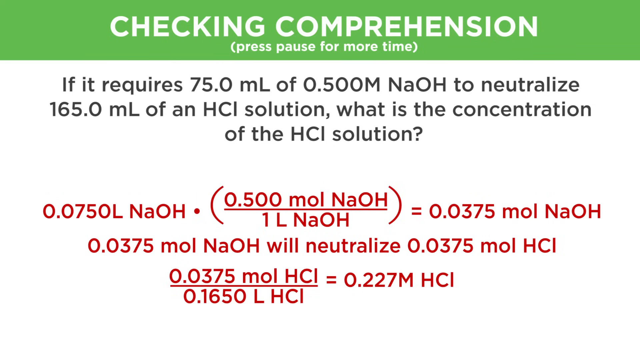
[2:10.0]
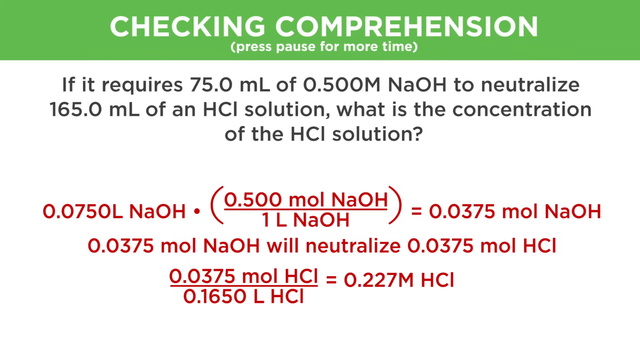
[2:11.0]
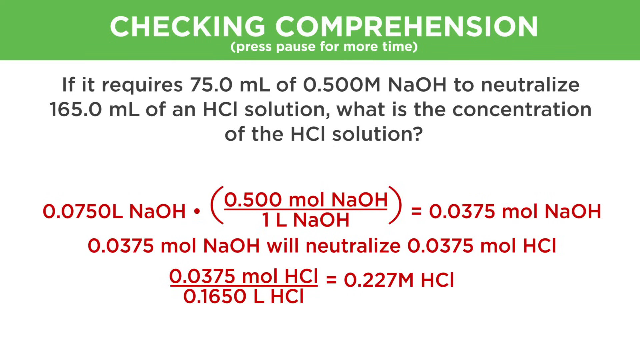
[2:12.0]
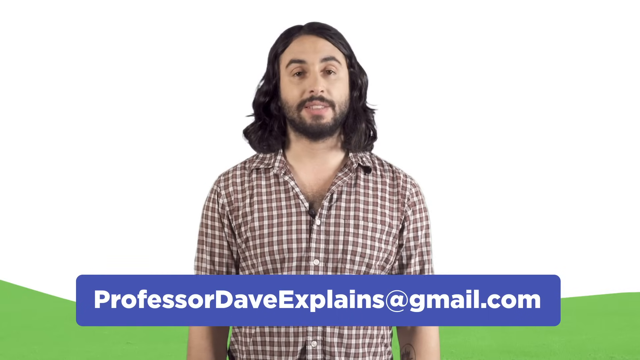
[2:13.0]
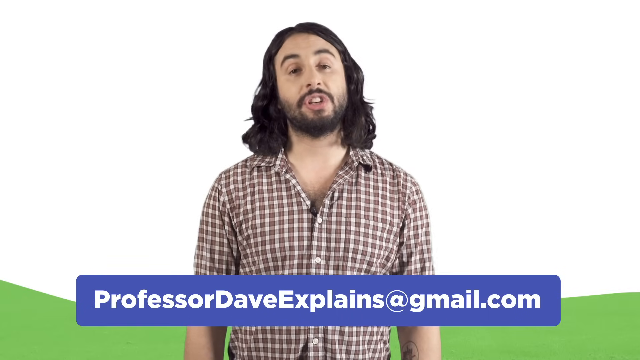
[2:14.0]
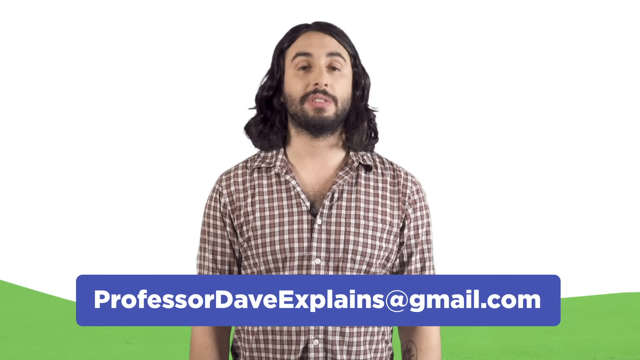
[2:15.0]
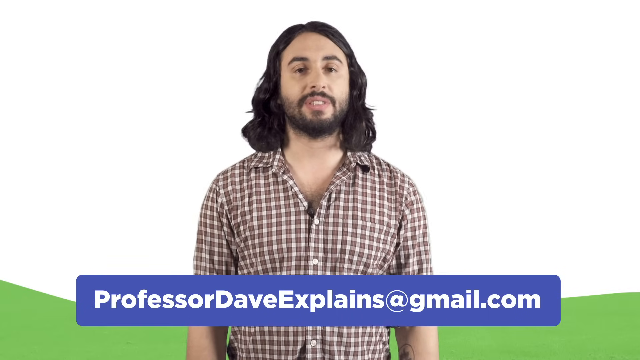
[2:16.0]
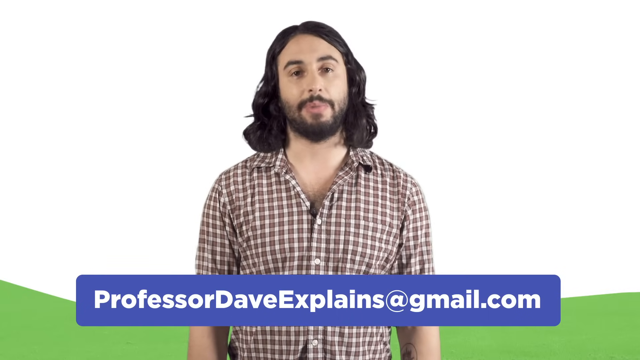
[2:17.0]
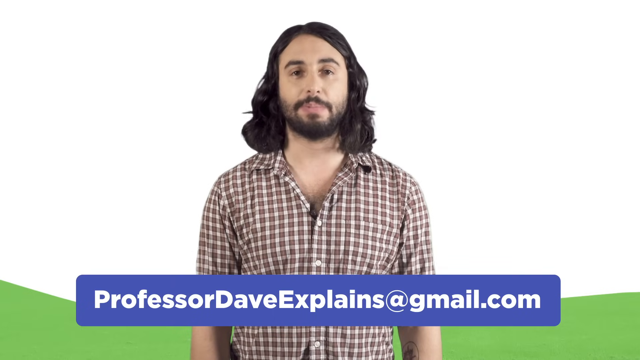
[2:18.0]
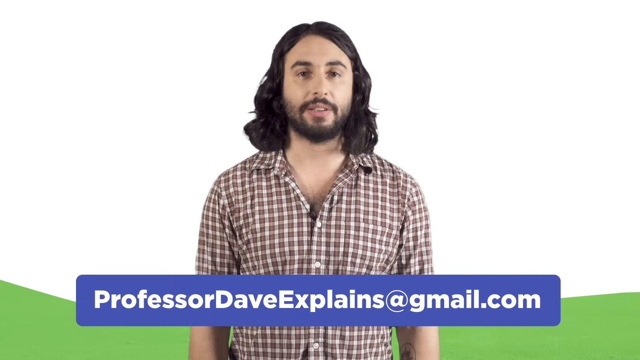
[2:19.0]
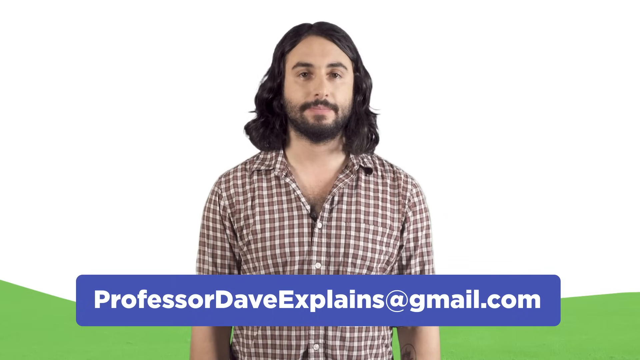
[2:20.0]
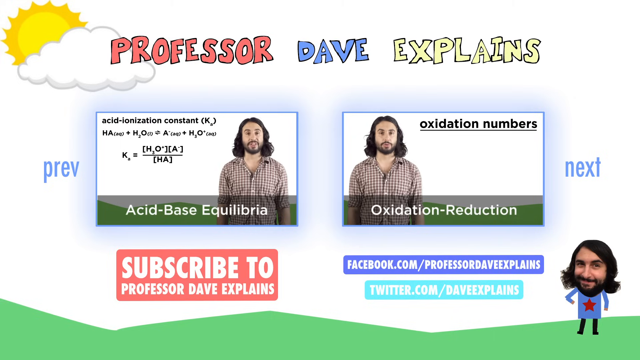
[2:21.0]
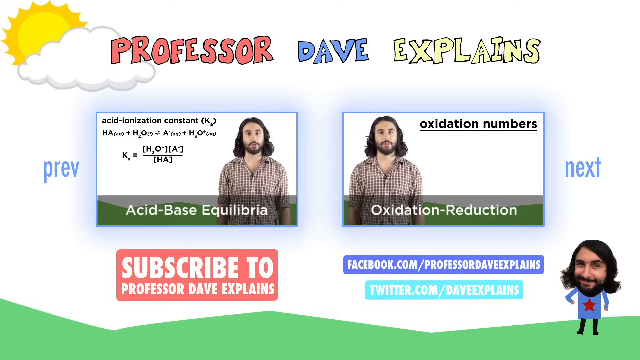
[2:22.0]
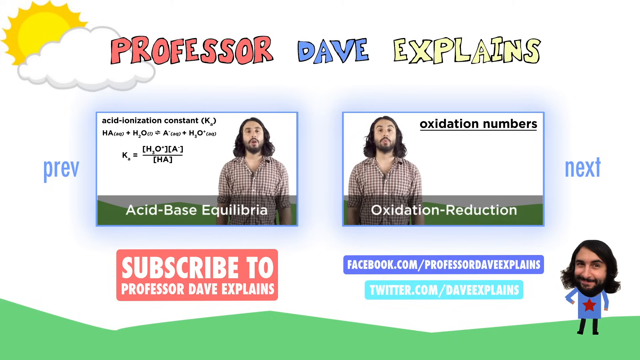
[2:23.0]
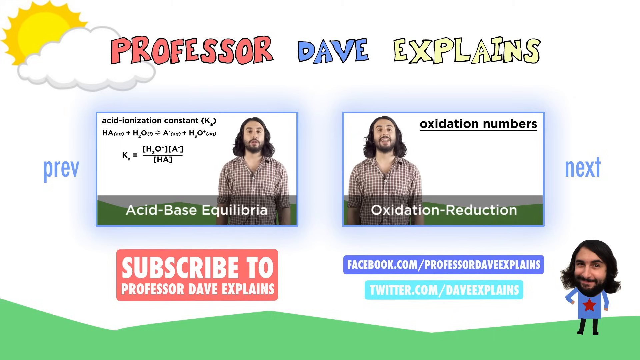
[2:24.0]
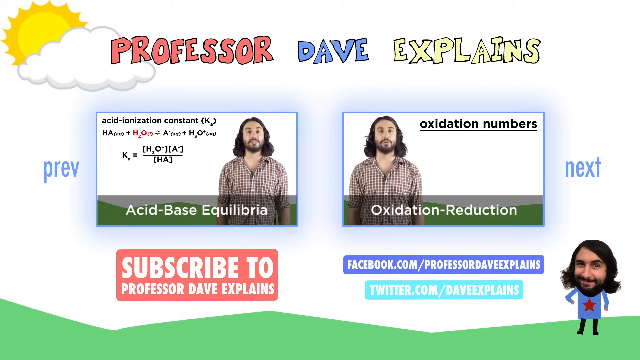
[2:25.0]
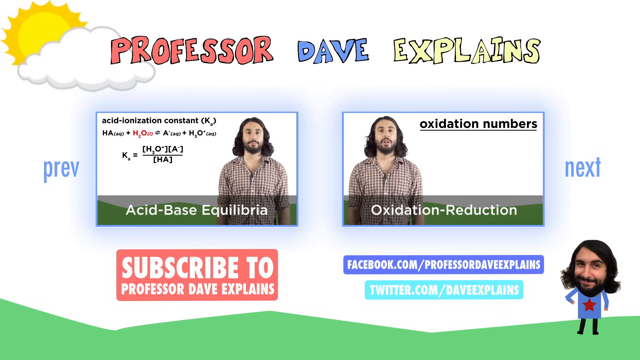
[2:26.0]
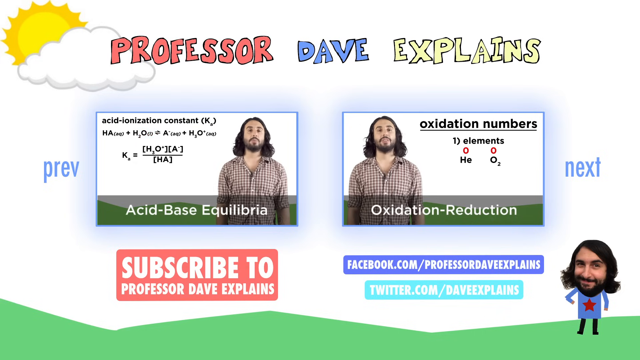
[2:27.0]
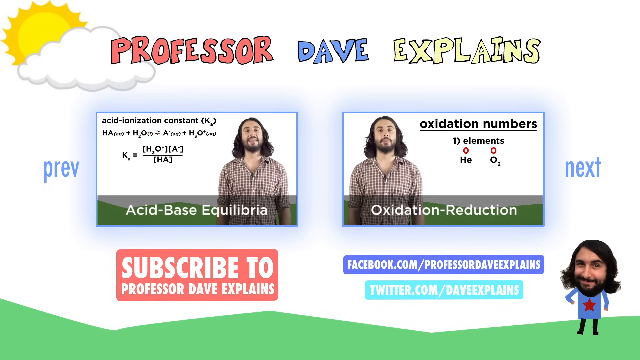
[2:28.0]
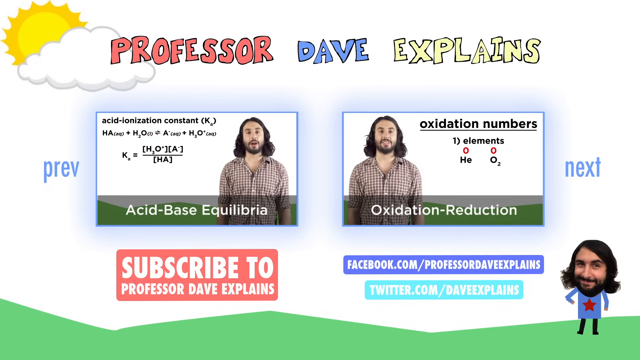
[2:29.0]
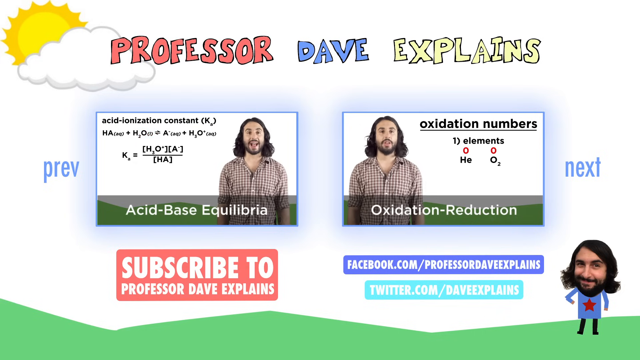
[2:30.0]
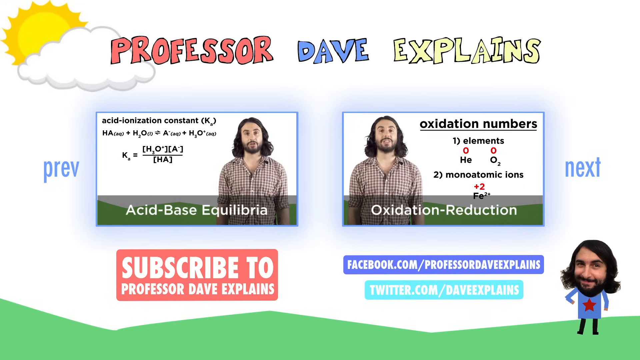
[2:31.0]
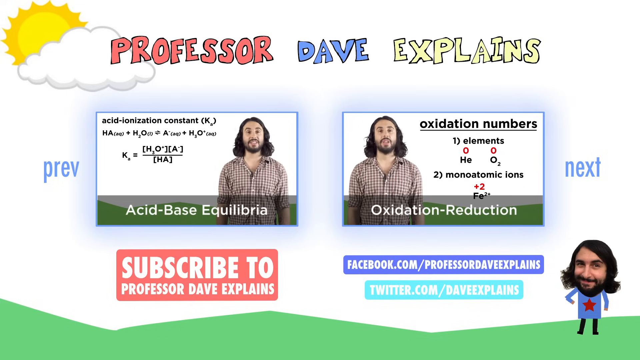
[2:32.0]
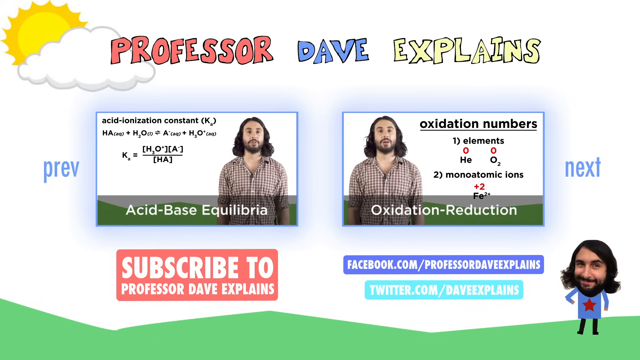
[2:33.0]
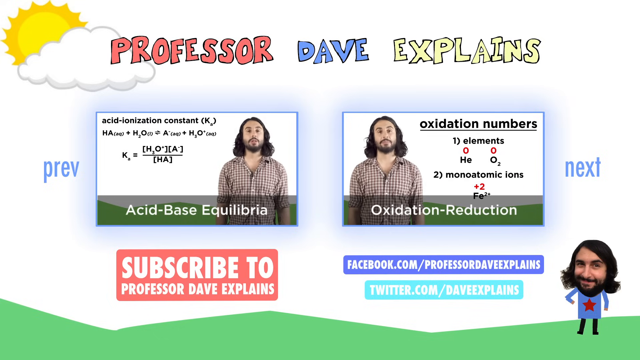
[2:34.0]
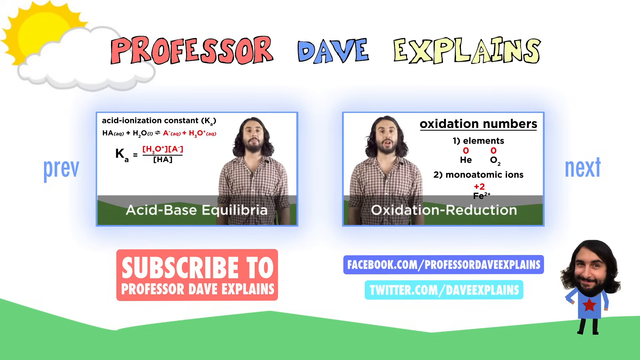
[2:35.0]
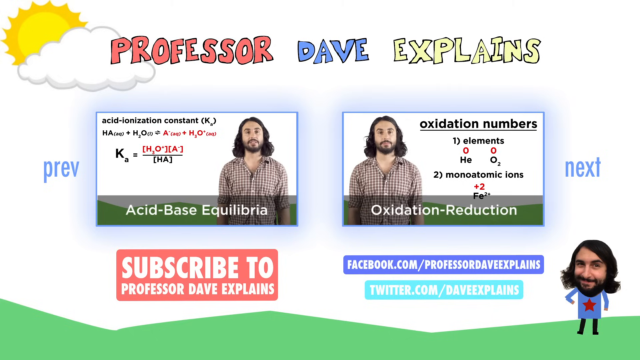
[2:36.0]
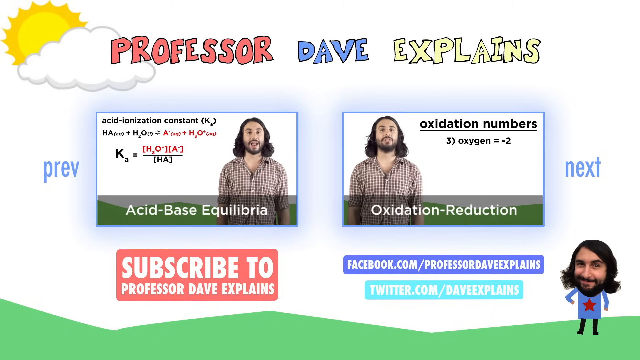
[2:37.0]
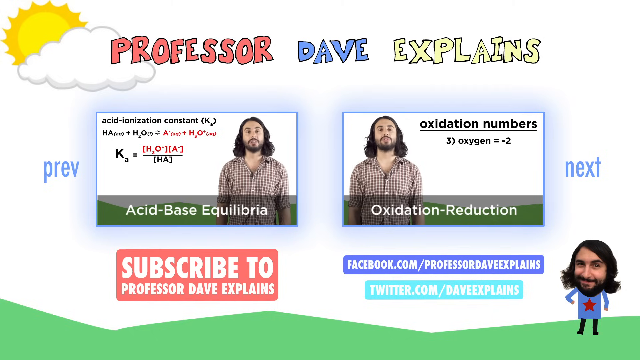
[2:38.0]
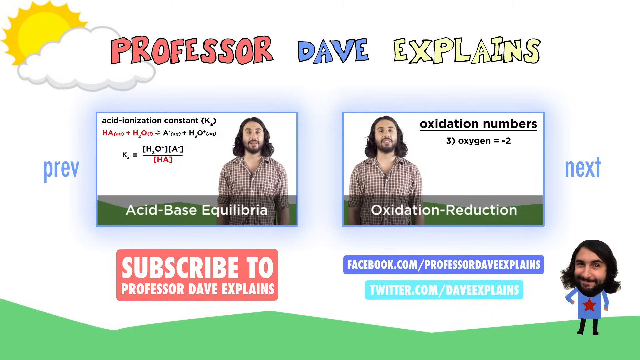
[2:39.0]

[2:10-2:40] A formula is shown demonstrating how to calculate an answer. The name Professor Dave appears along with his email address and his YouTube channel, with text to subscribe to Professor Dave Explains. Facebook at facebook.com as Professor Dave Explains and a Twitter handle are also shown. Two topics appear: acid-base equilibria and oxidation reduction.